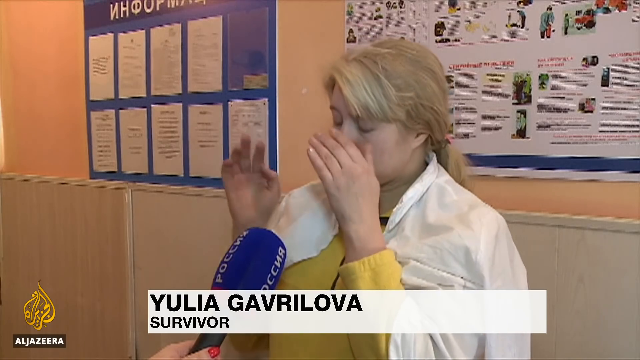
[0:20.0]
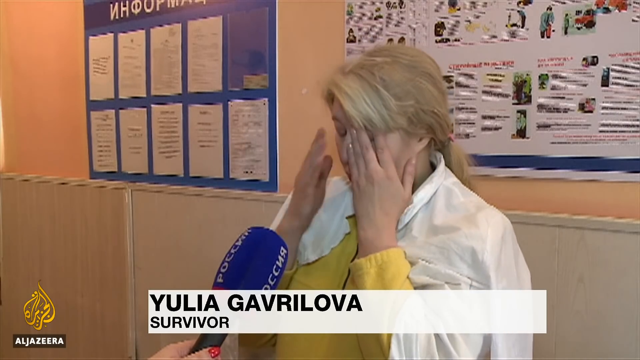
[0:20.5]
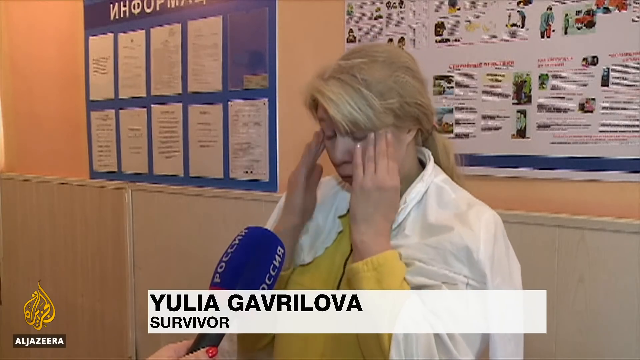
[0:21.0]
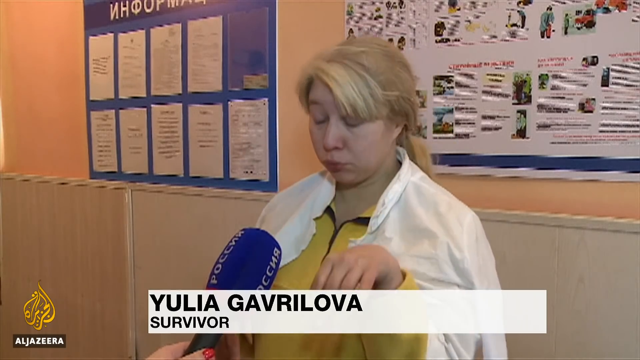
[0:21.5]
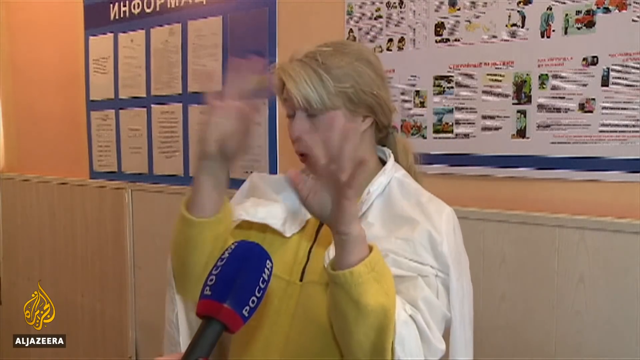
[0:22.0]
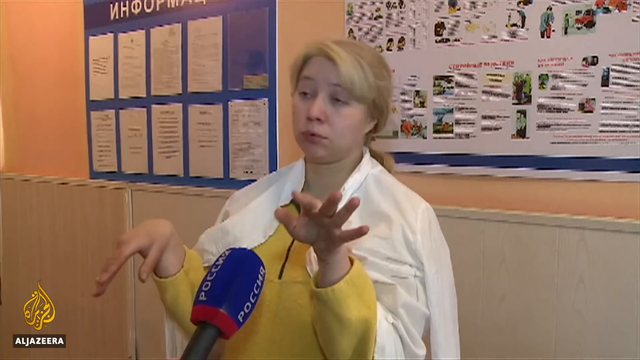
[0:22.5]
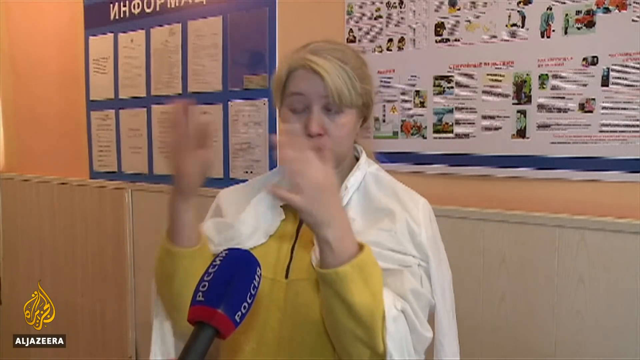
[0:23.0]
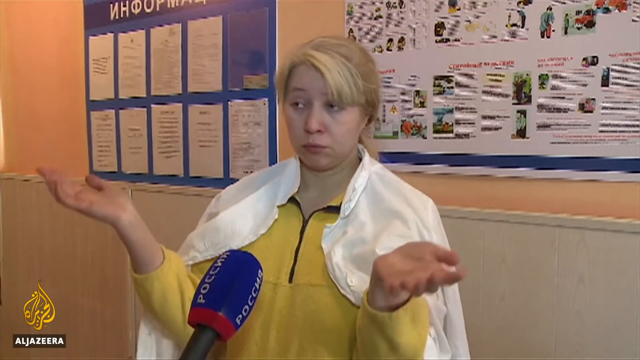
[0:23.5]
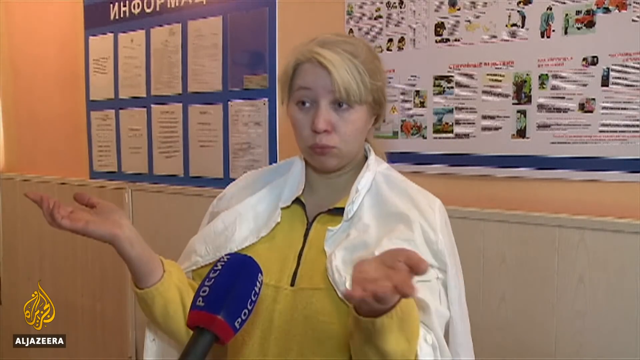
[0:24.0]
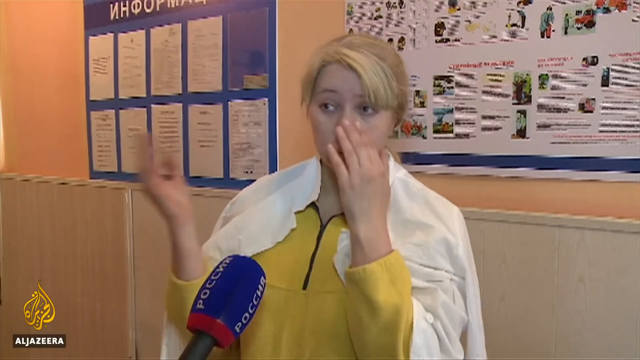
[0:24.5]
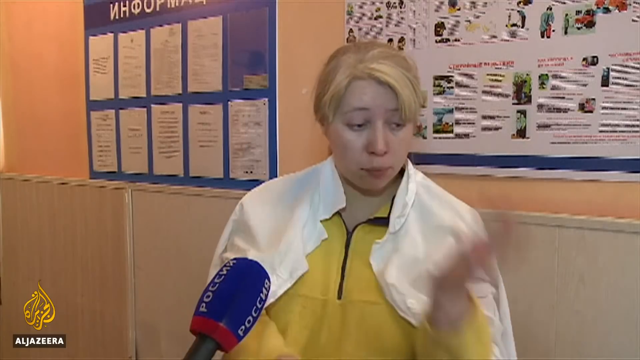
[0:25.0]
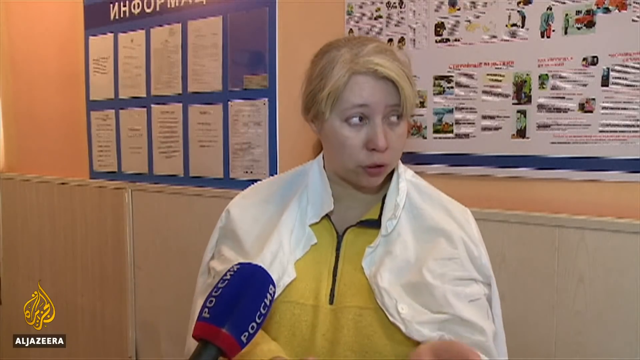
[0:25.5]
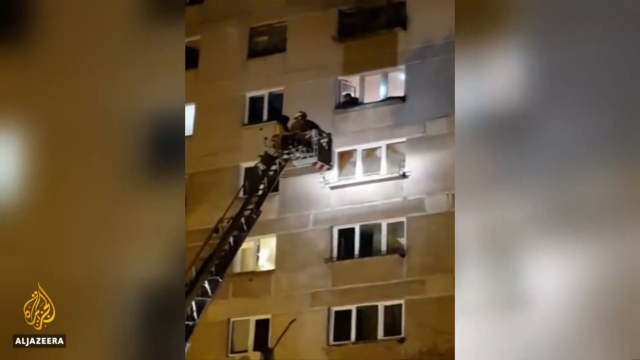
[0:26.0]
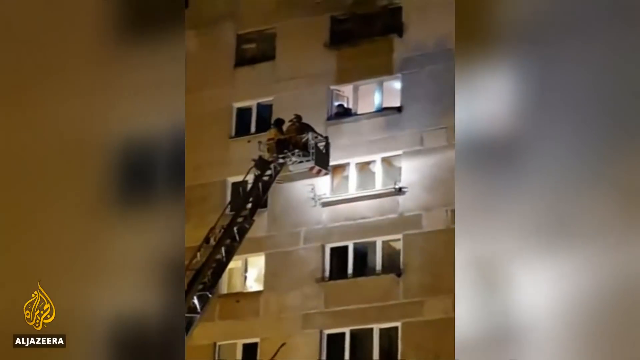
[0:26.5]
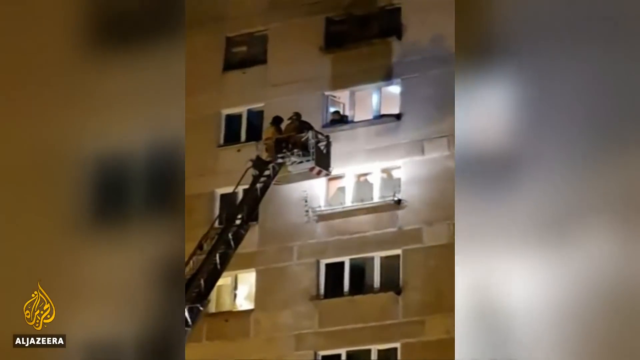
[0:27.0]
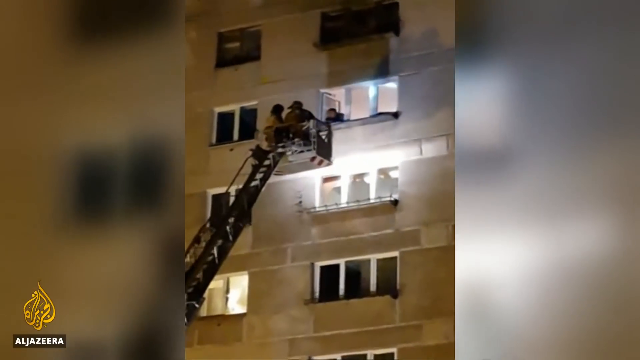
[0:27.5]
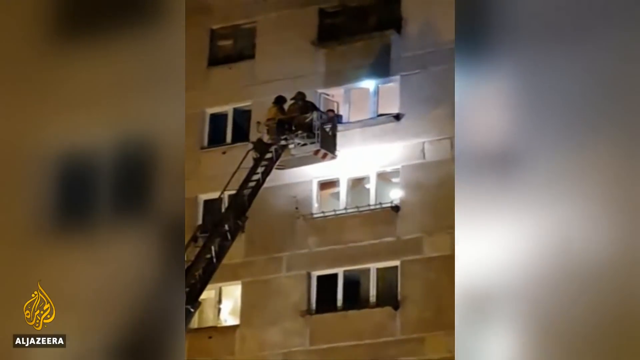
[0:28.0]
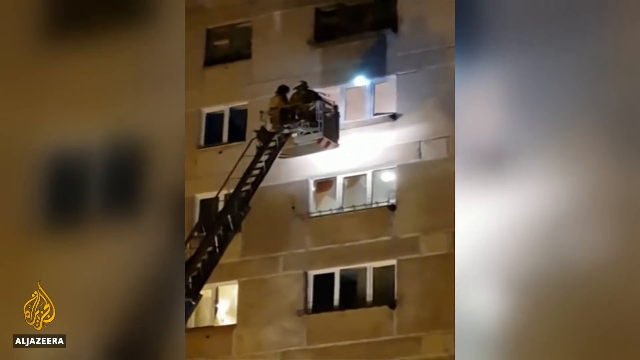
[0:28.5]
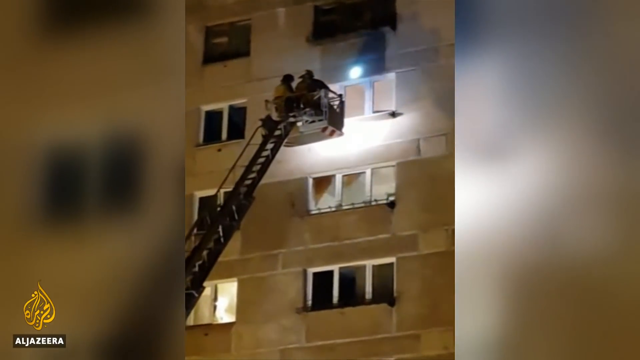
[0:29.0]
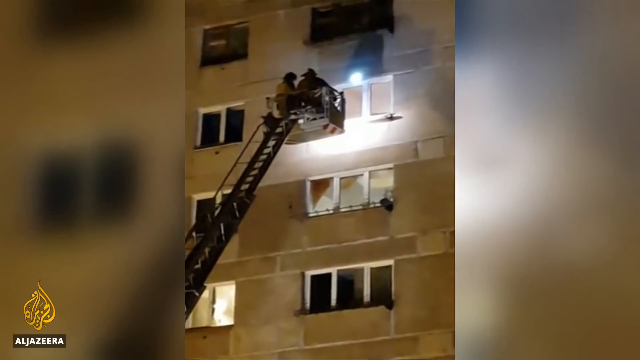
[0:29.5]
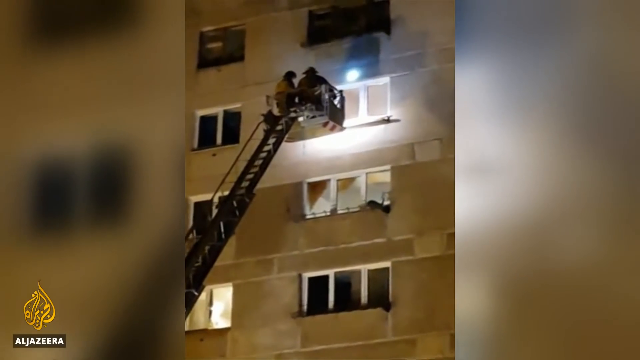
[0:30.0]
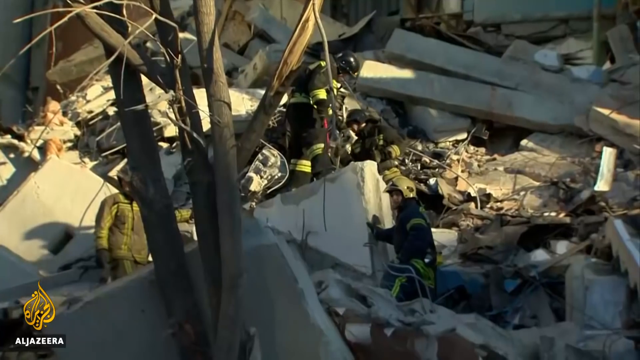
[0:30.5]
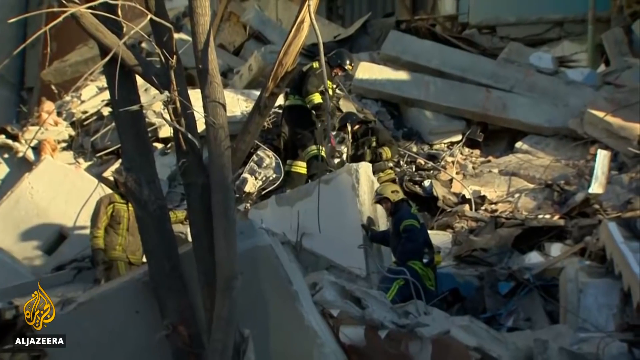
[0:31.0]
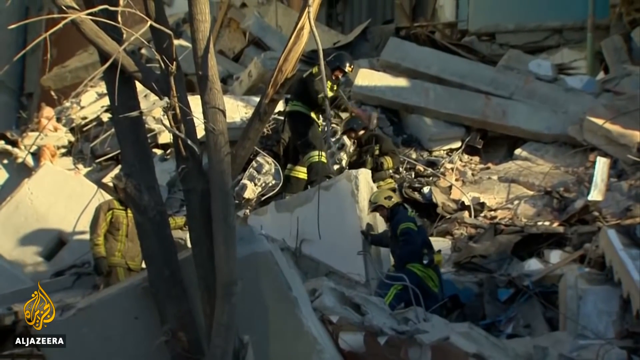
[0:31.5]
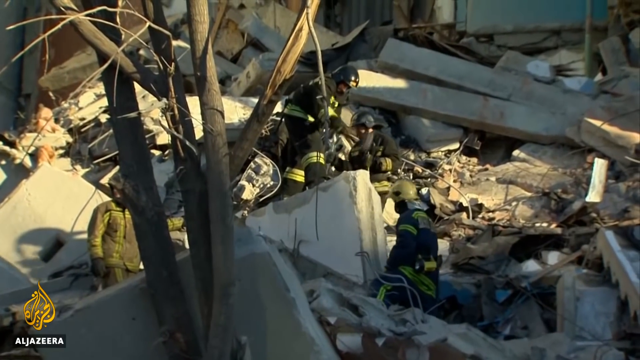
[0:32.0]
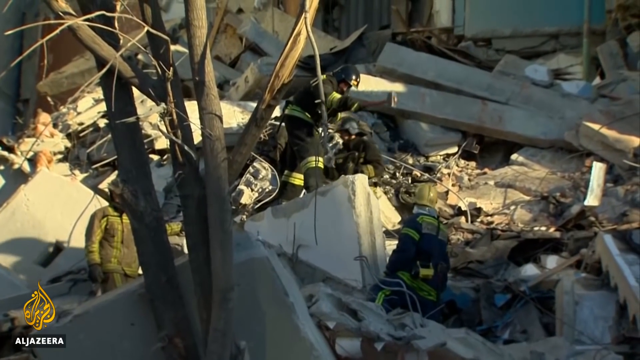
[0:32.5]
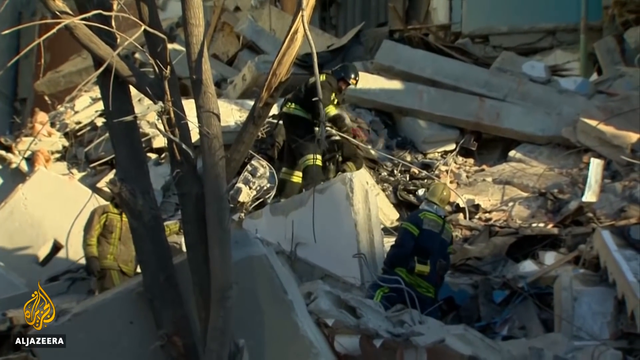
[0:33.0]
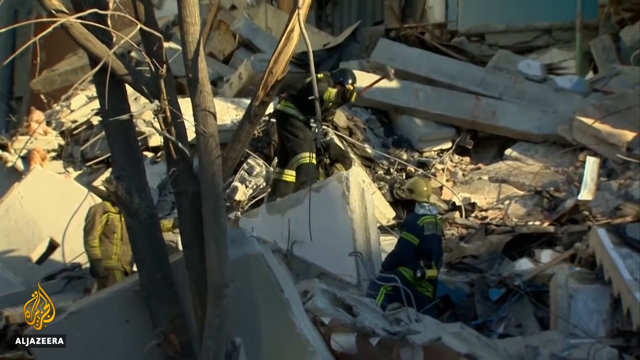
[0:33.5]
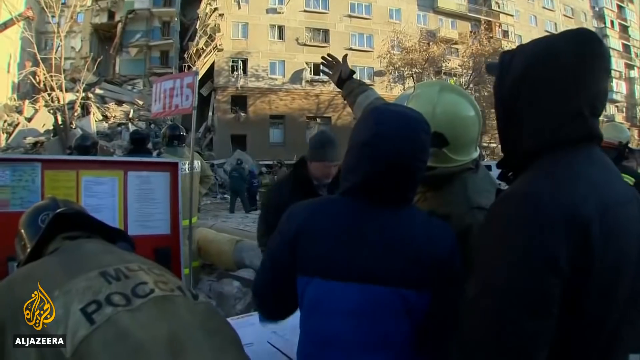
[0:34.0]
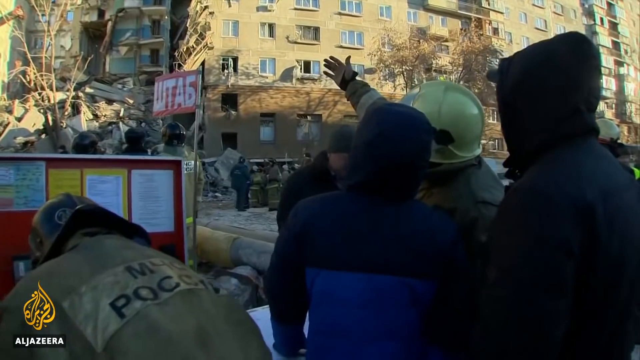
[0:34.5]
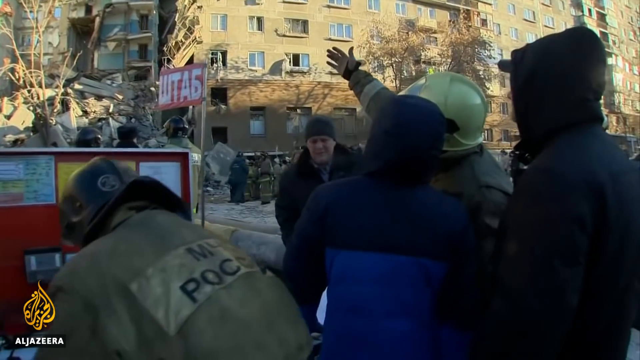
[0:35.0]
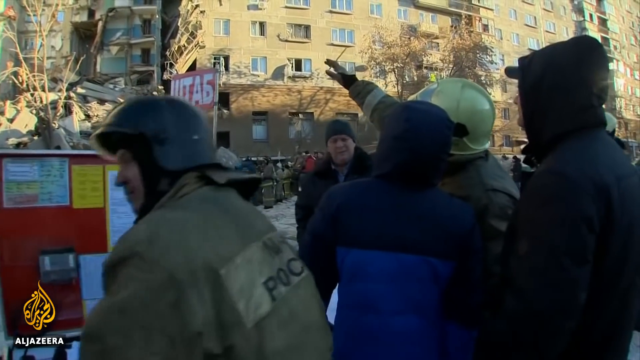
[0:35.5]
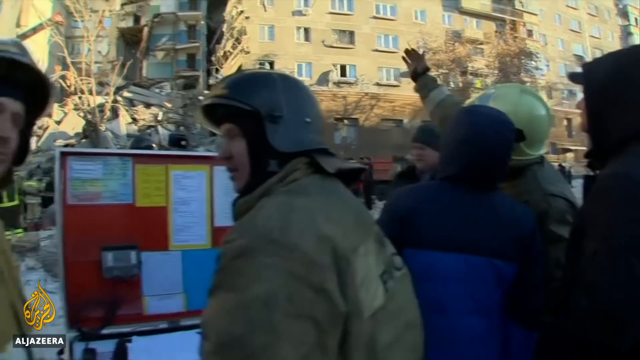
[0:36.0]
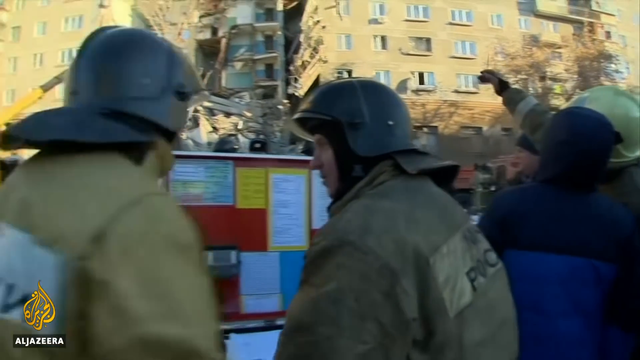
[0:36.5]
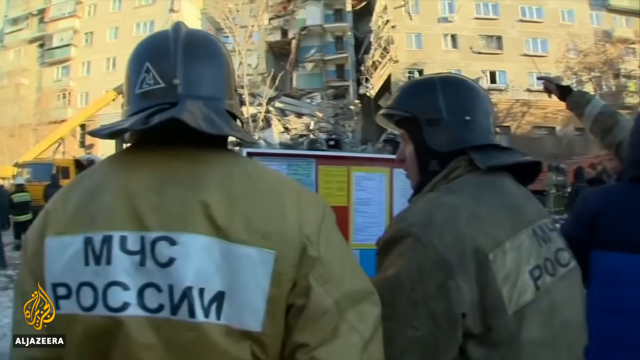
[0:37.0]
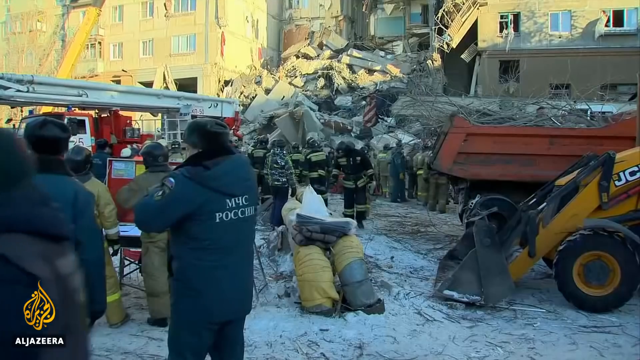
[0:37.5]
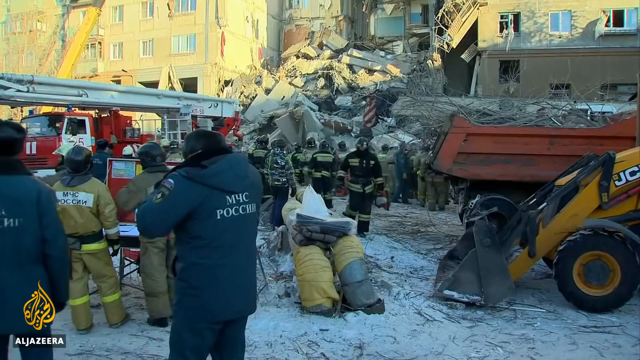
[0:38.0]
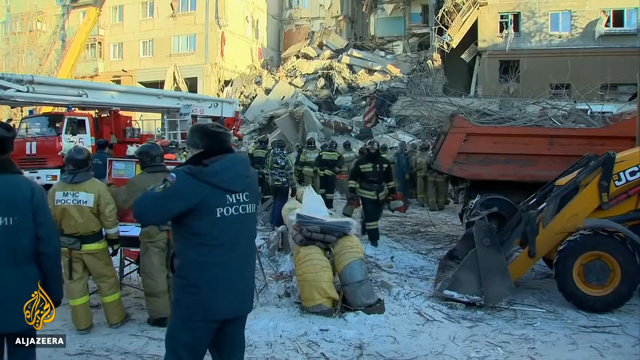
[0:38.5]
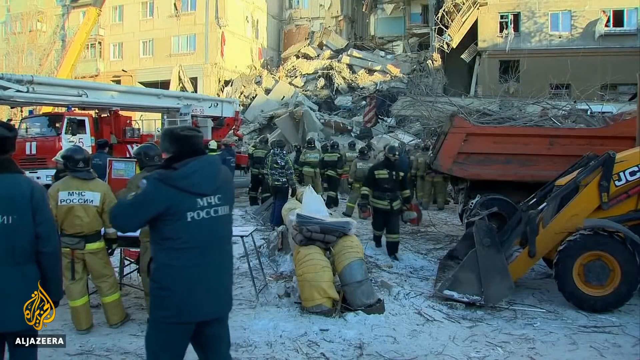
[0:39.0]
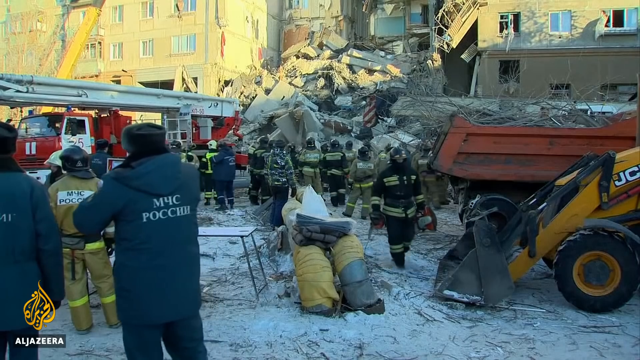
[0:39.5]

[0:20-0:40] The survivor continues speaking, seemingly expressing her feelings about the incident. A large crane helps people out of their buildings. A firefighters' truck is at the scene. A rescue worker gathers toward a group of people, possibly directing them or providing them with information.